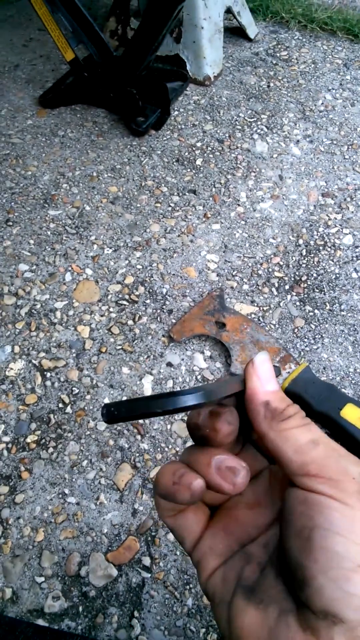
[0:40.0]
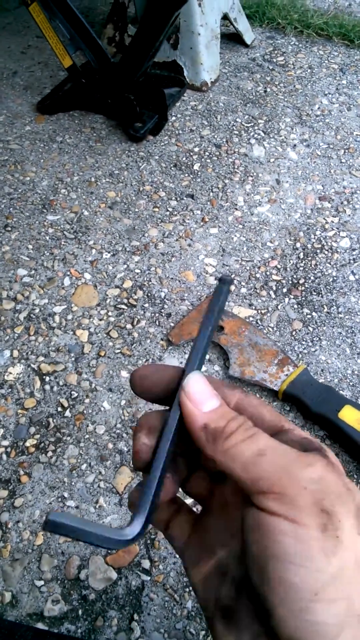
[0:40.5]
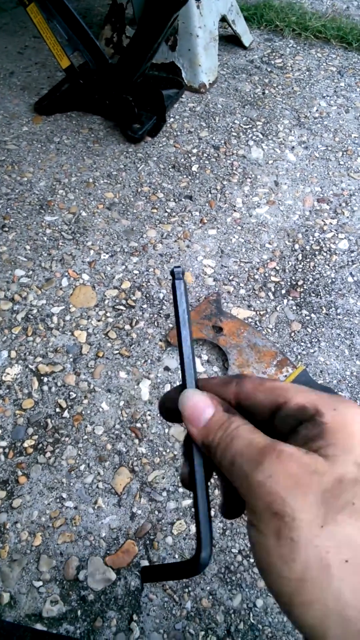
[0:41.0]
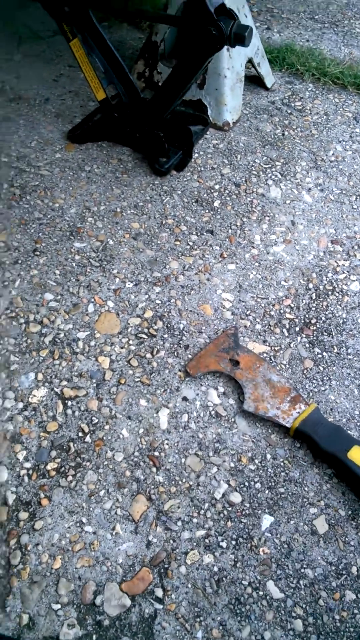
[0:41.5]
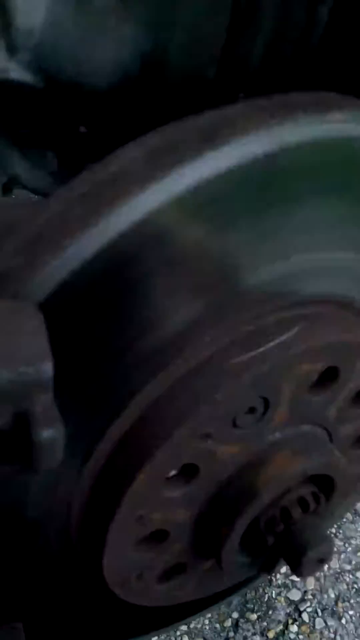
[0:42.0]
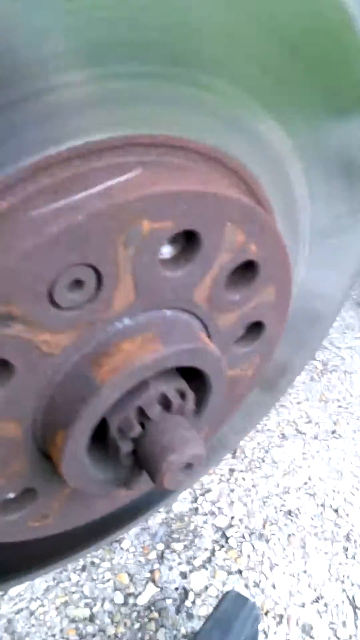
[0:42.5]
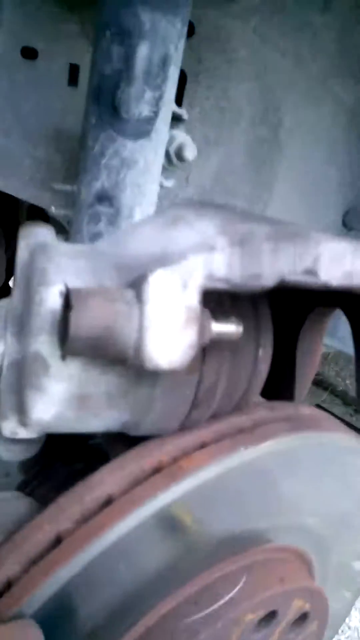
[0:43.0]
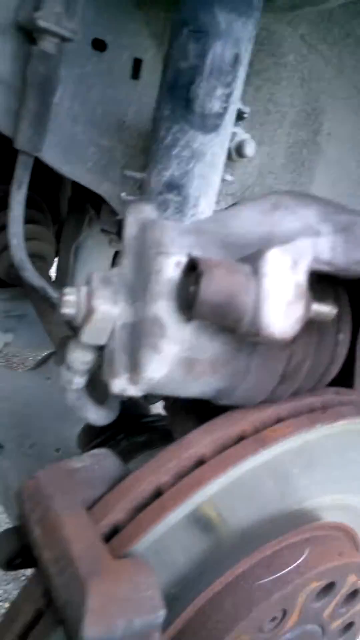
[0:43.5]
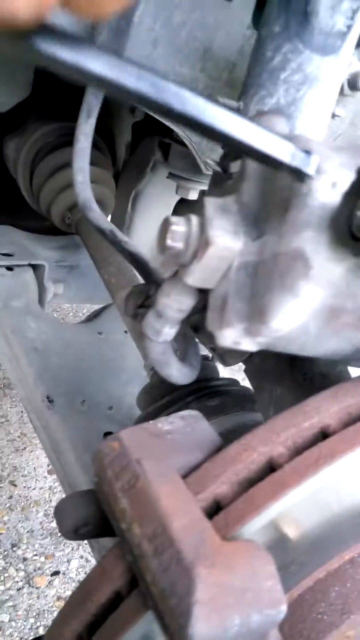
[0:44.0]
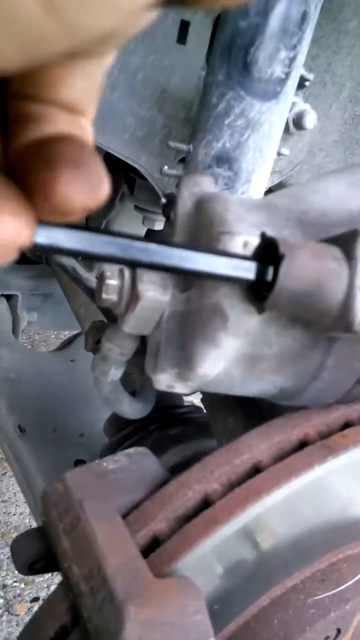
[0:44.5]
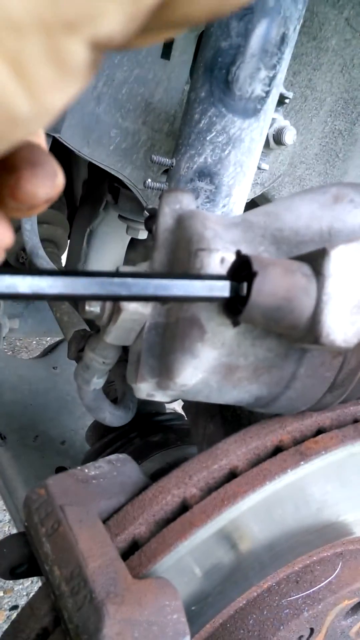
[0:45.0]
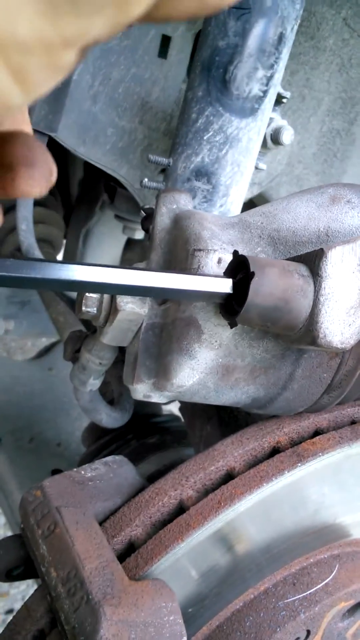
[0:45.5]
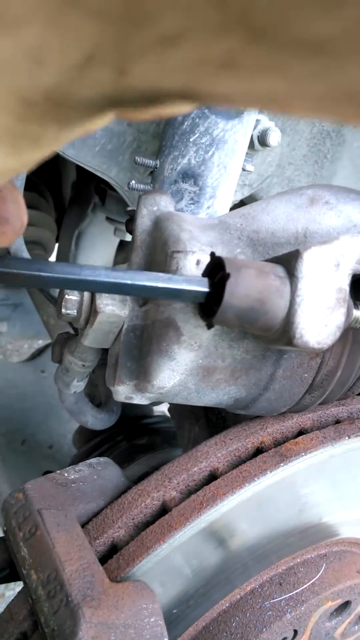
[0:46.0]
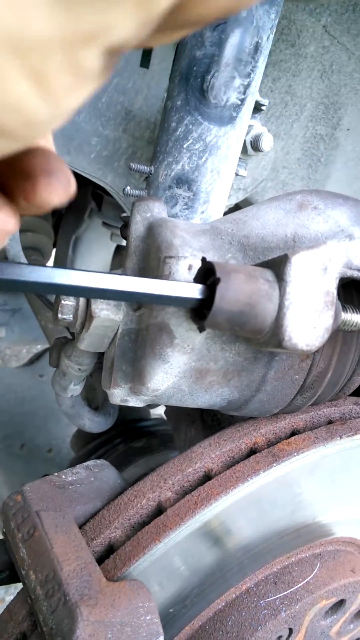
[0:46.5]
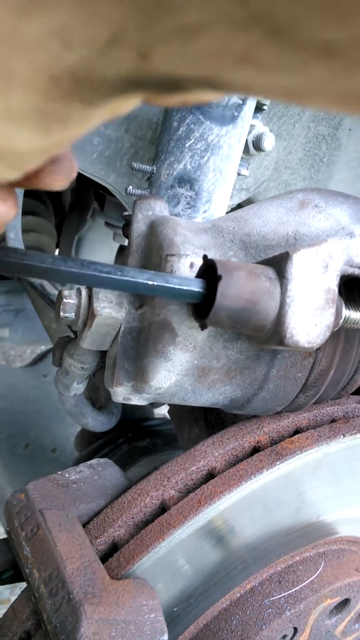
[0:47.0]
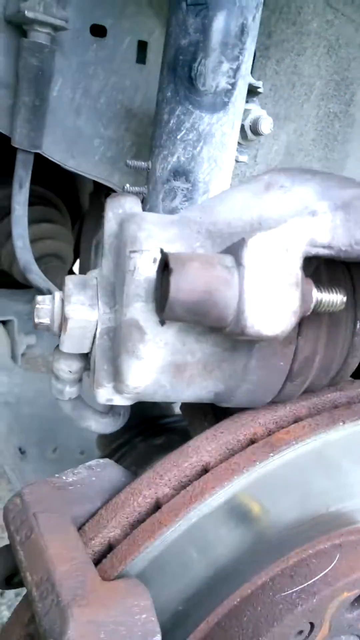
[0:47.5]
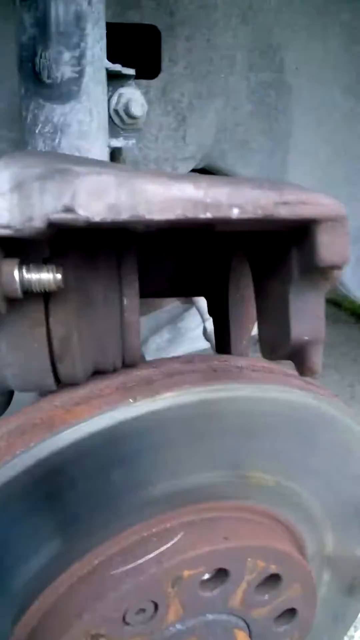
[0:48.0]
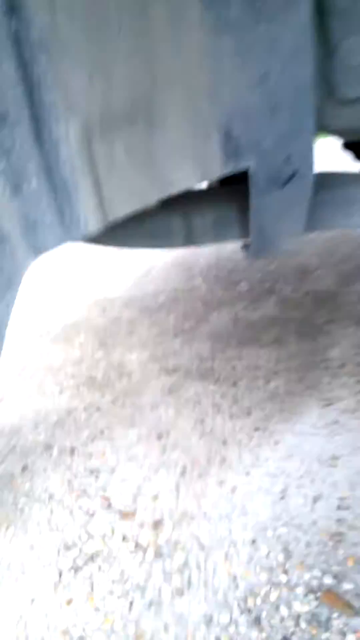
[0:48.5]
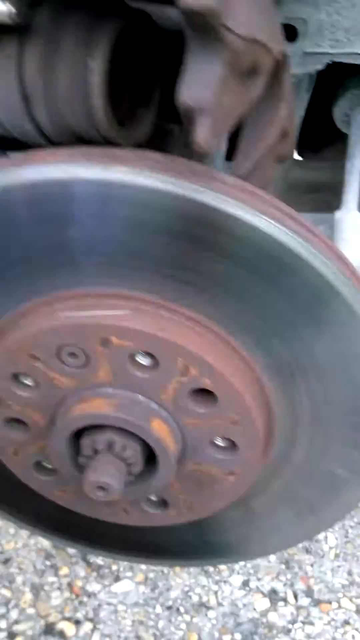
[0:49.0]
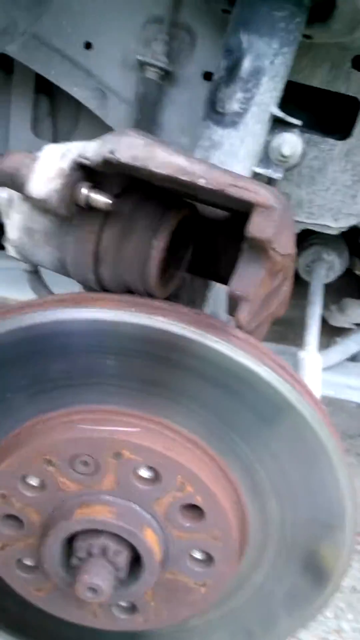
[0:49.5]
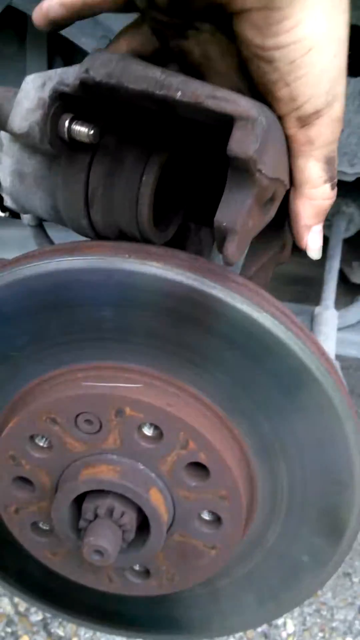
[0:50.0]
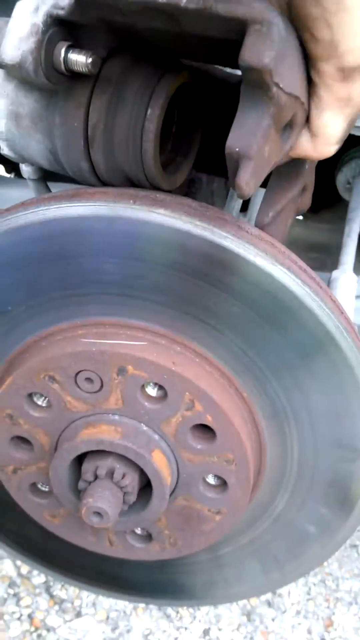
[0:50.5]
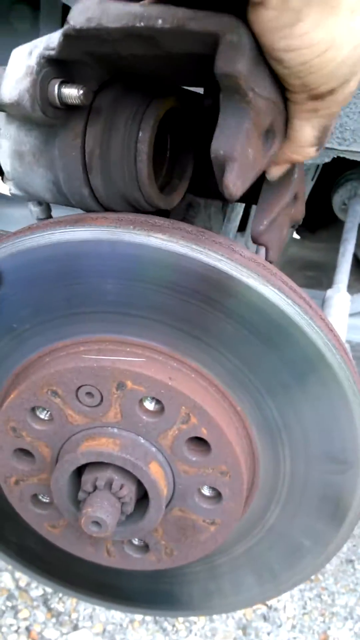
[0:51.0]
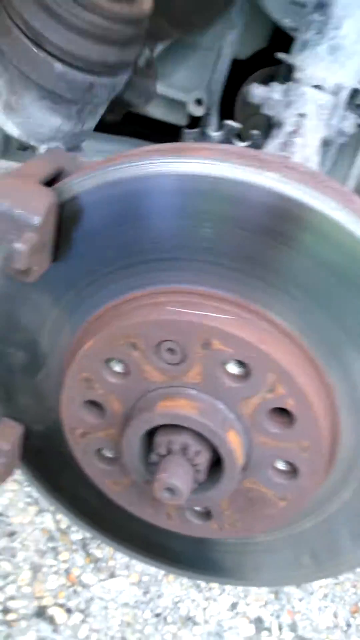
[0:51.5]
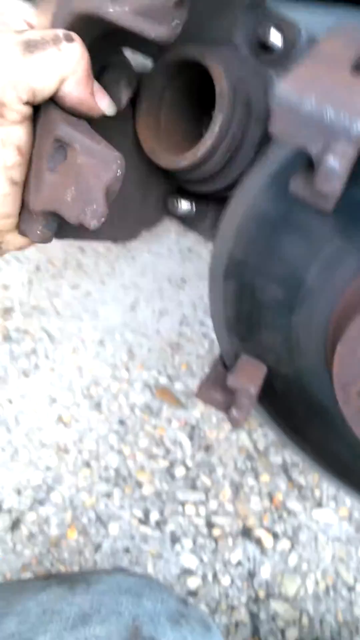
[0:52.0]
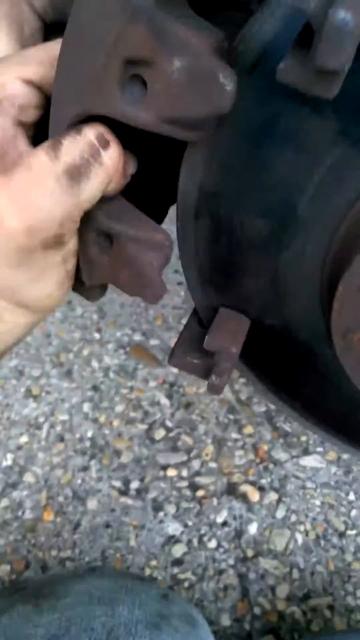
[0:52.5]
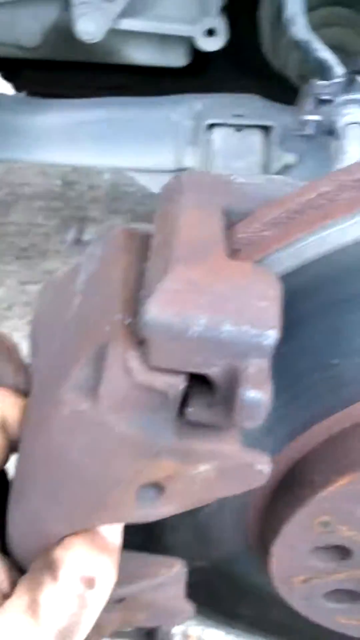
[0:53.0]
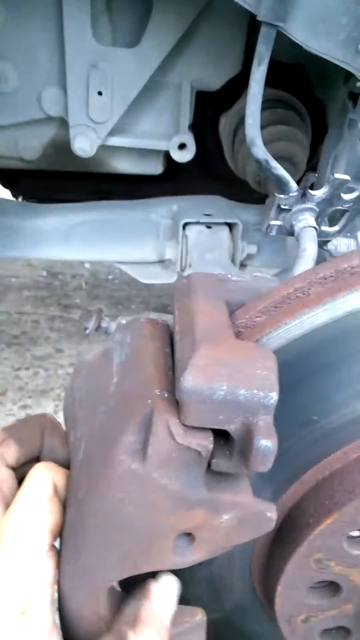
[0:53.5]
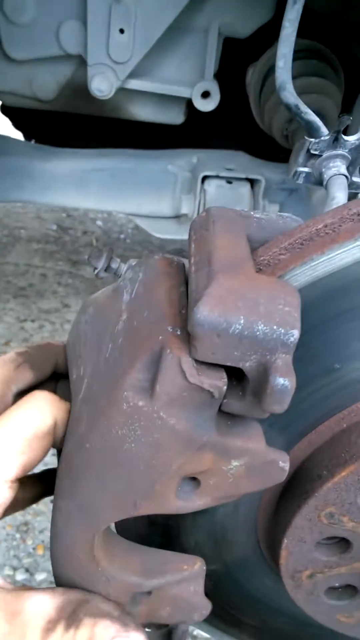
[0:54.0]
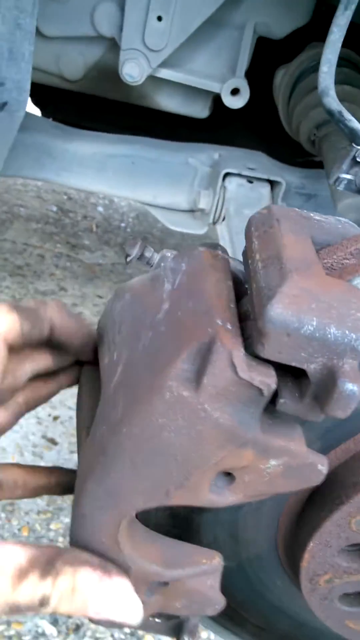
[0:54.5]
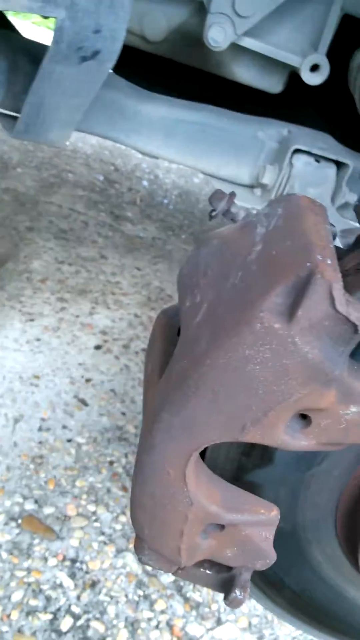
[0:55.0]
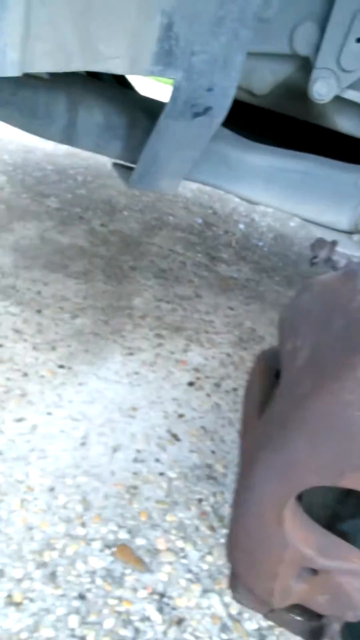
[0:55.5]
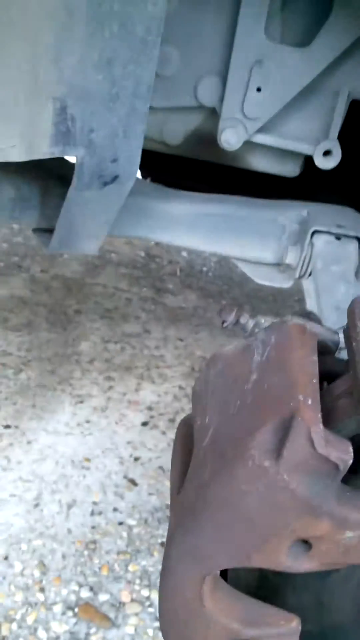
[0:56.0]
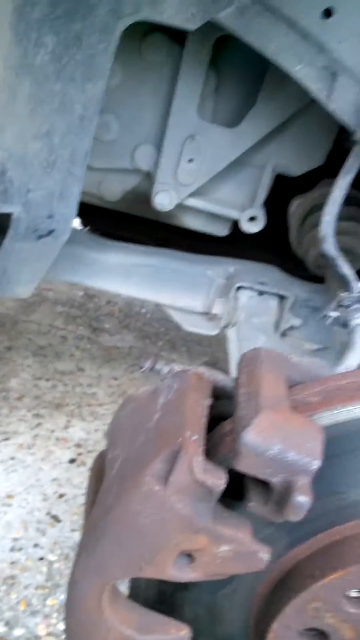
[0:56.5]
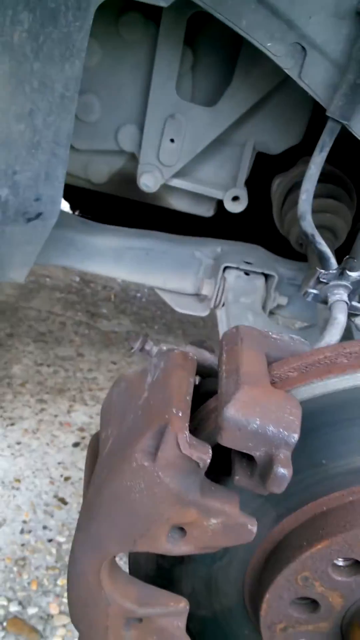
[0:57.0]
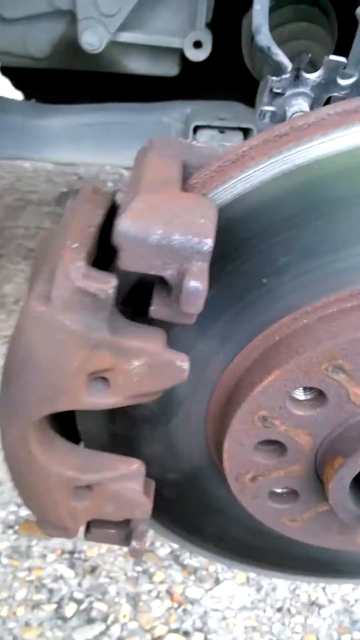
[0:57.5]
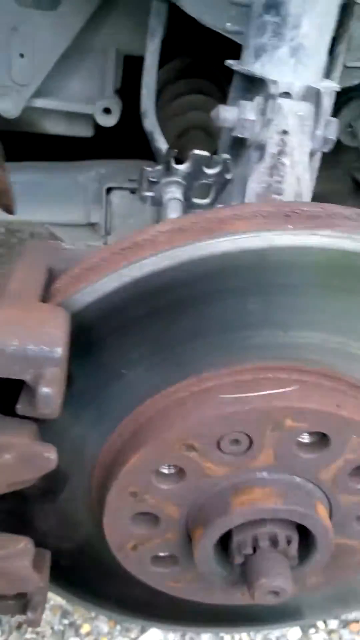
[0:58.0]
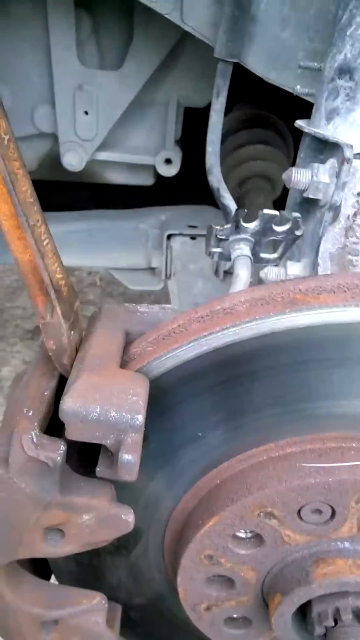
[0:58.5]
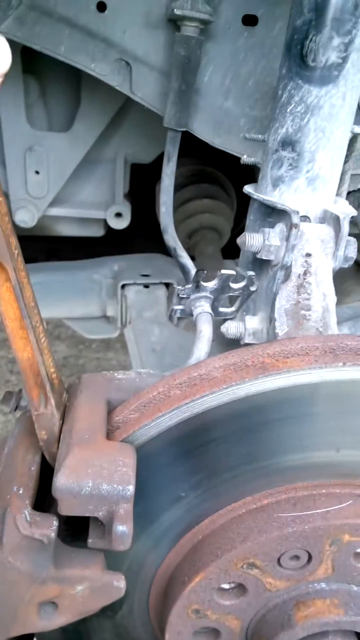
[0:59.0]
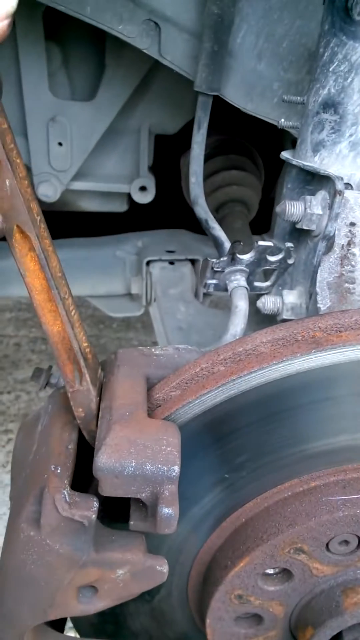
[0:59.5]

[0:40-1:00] Mobile phone footage shows a kind of concrete floor with stones embedded in it, with a man's hand at the bottom of the screen. He holds a big black allen key between his thumb and forefinger, showing it from the top end and then from the side. On the floor there is what looks like a paint stripper. He moves the camera to a close-up of part of a vehicle: a kind of circular metal disc and a piece of kit with some nuts sticking out of it and some rubber casing. He puts the allen key into the edge of that piece and turns it slightly to the right, then picks the piece up with his left hand and places it alongside the metal disc. After shaking the camera around quite a bit, he gets some kind of metal measuring tool and checks the gap, apparently to see whether he has fitted the piece on correctly.